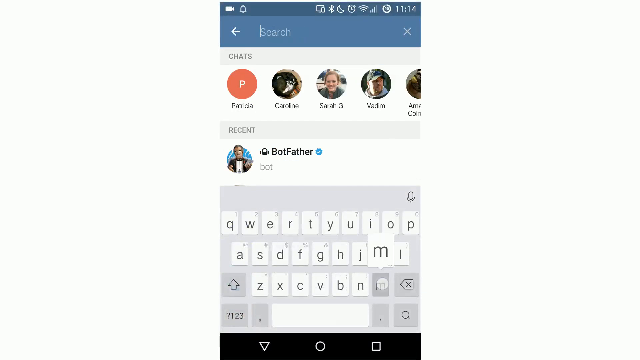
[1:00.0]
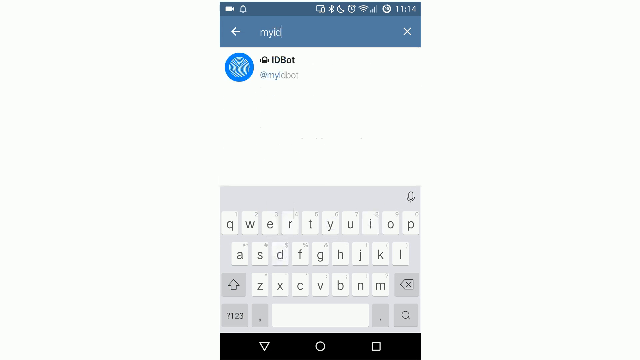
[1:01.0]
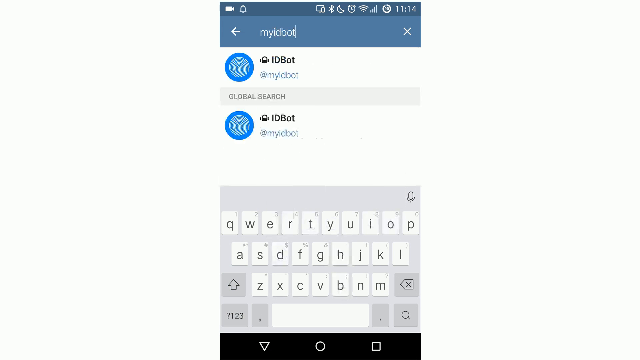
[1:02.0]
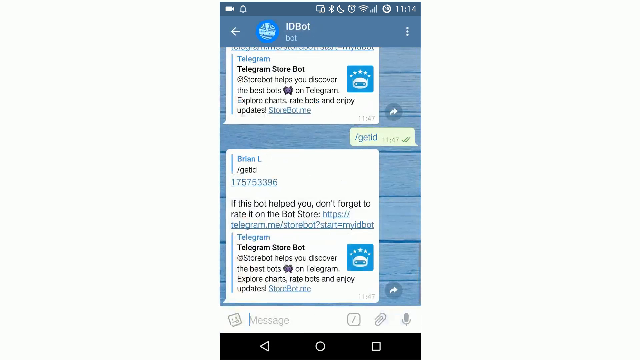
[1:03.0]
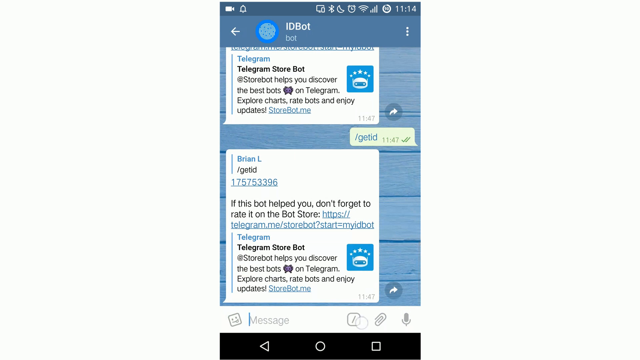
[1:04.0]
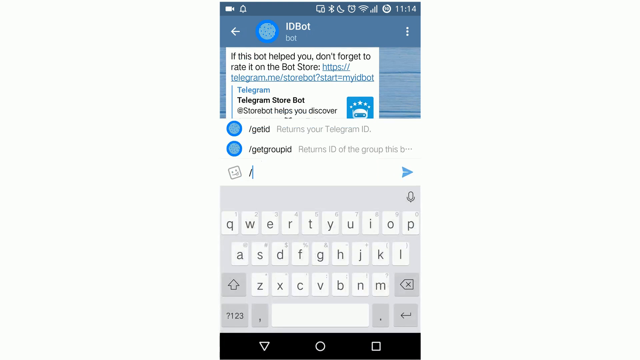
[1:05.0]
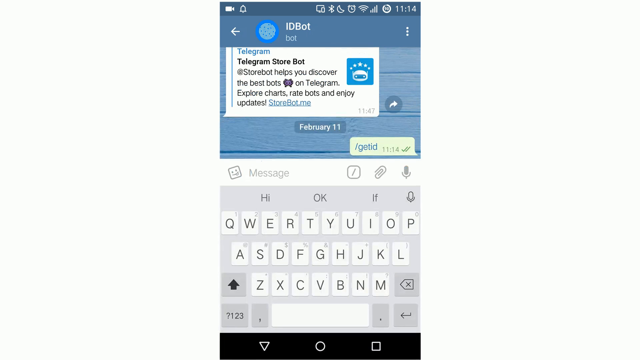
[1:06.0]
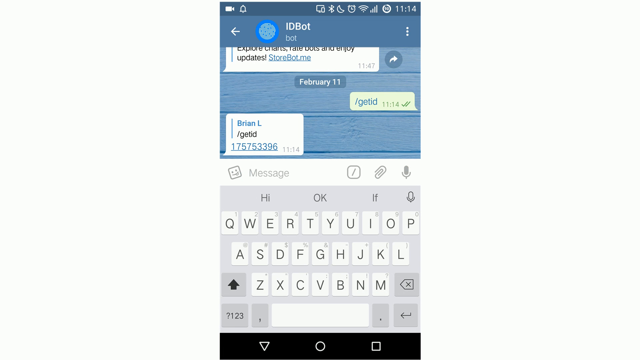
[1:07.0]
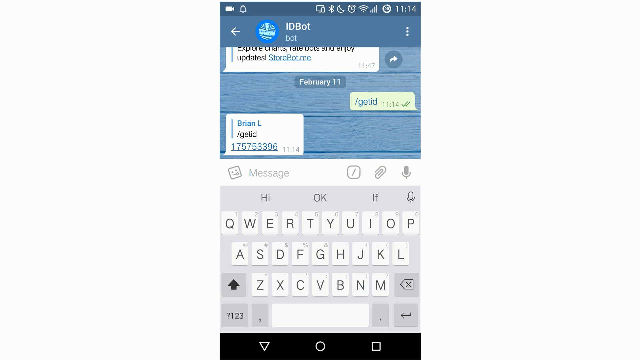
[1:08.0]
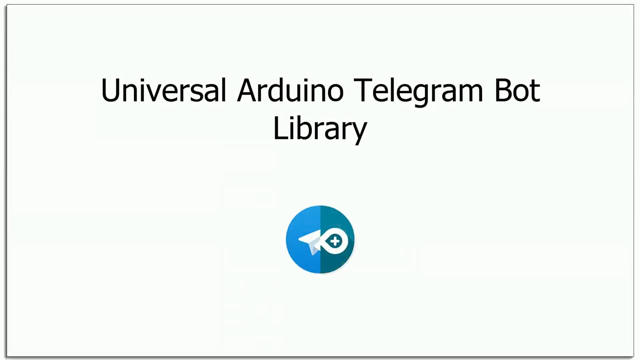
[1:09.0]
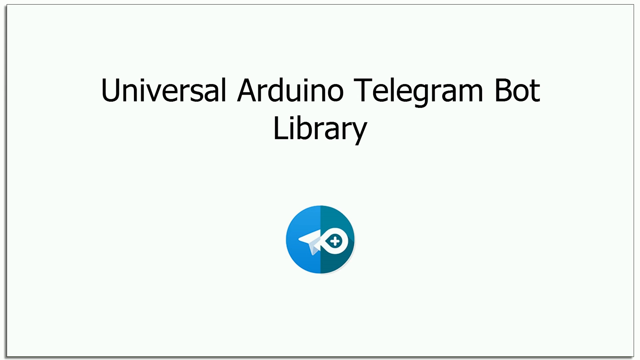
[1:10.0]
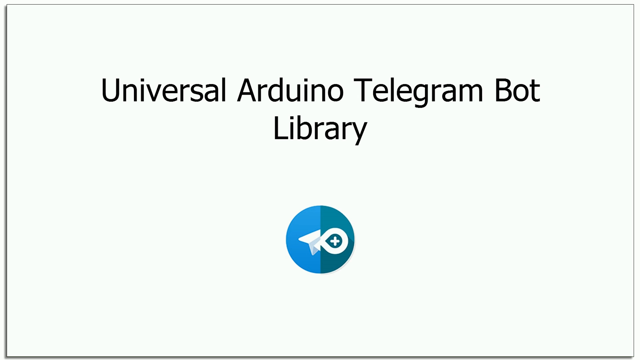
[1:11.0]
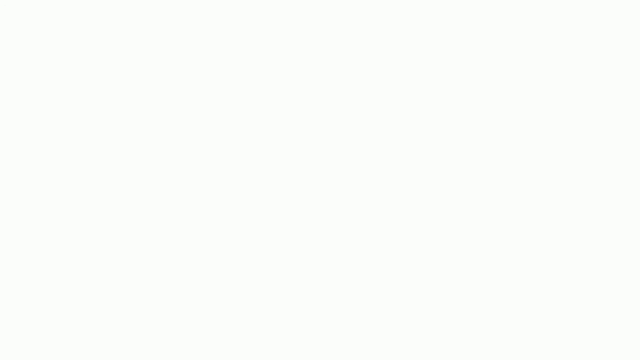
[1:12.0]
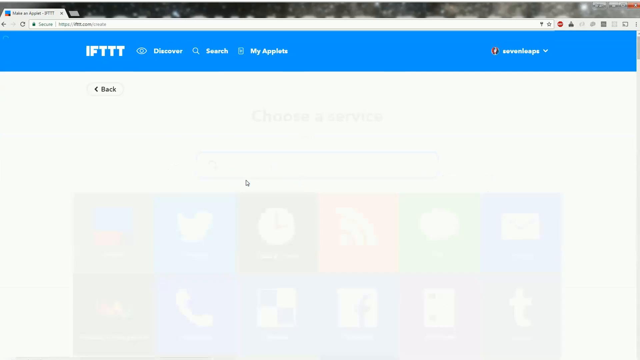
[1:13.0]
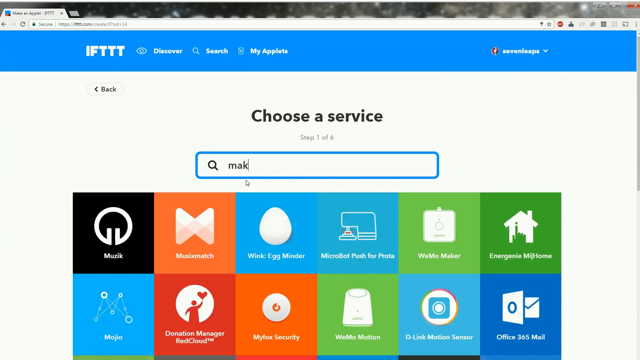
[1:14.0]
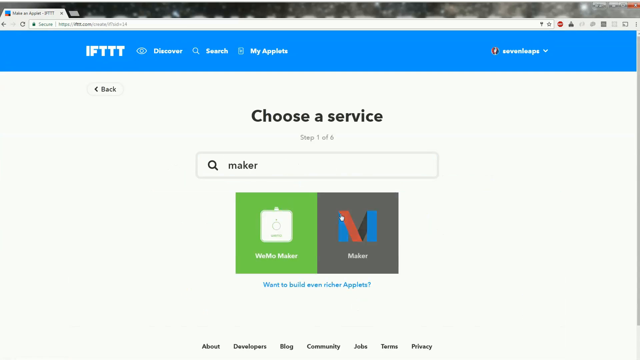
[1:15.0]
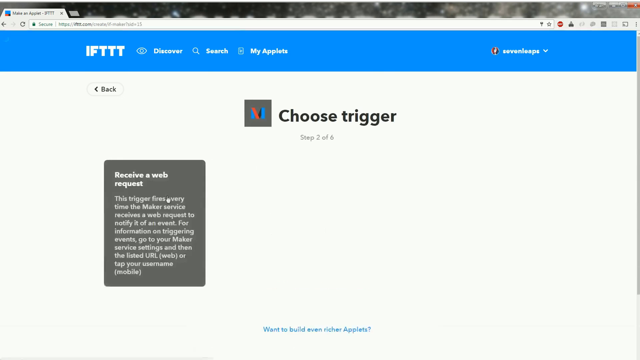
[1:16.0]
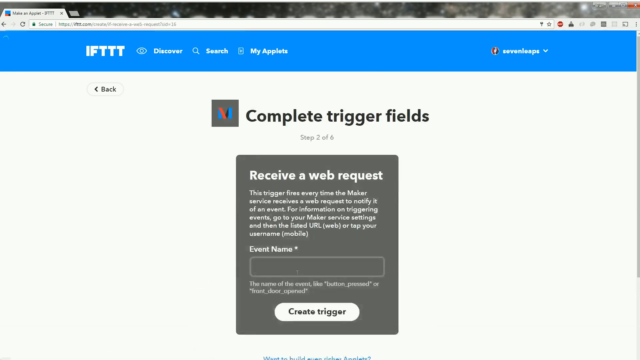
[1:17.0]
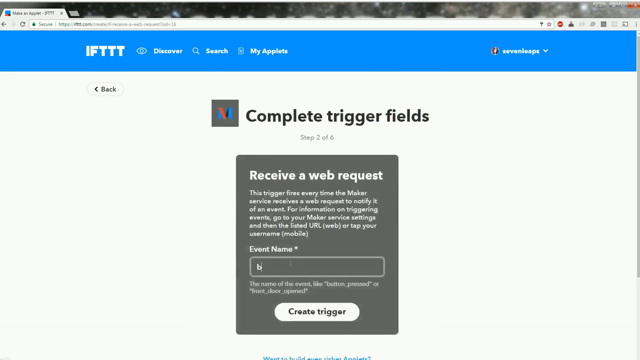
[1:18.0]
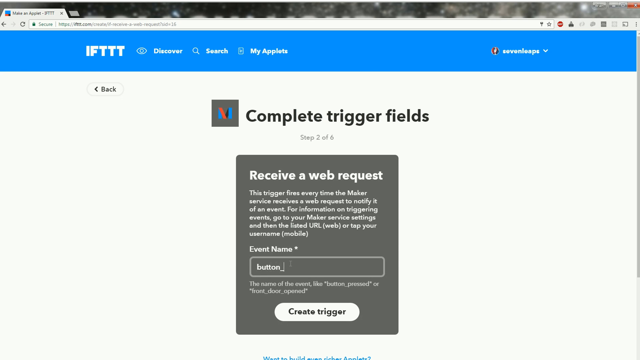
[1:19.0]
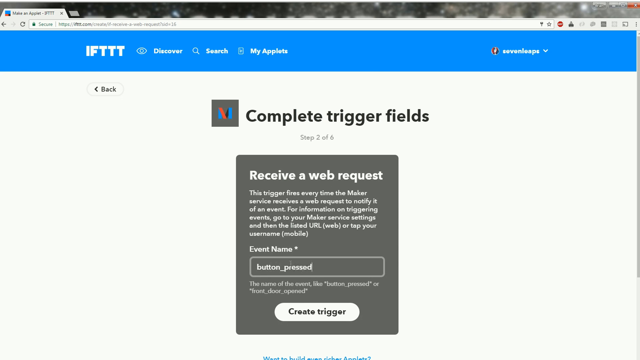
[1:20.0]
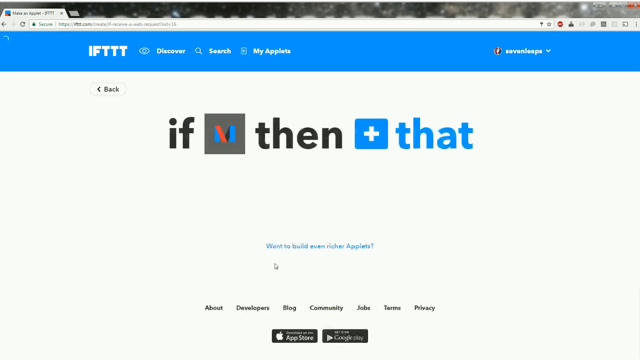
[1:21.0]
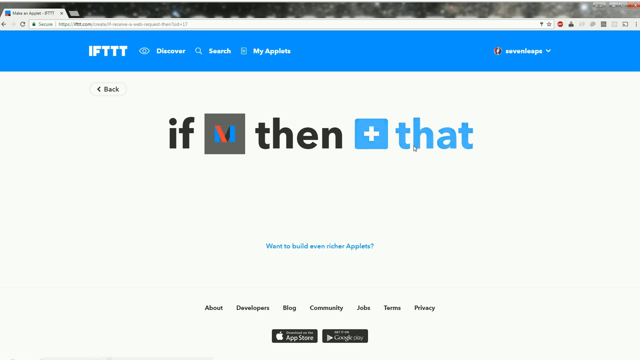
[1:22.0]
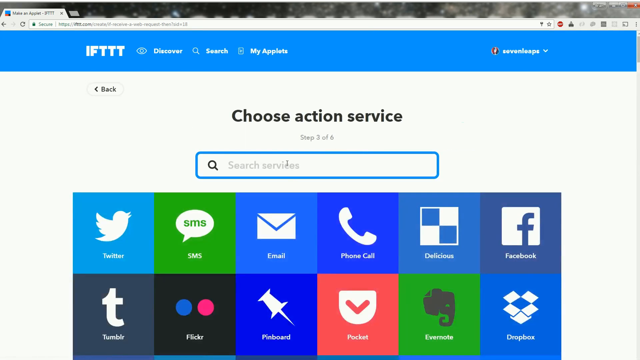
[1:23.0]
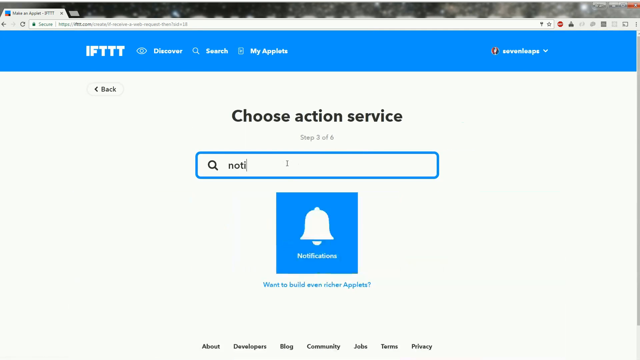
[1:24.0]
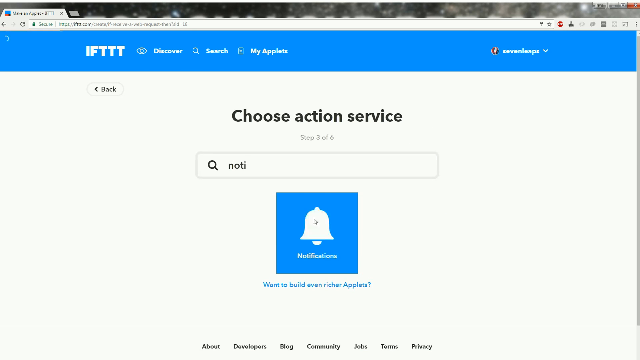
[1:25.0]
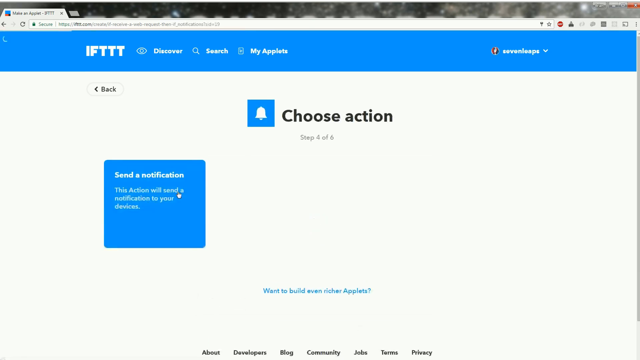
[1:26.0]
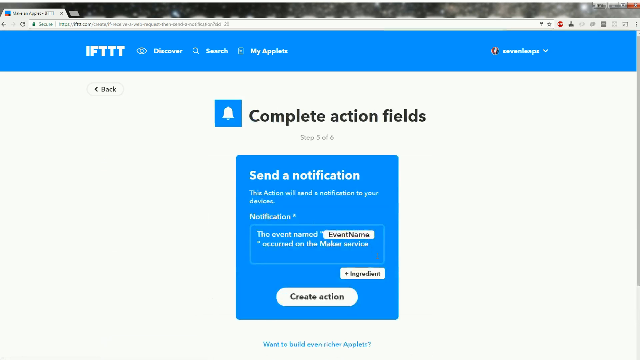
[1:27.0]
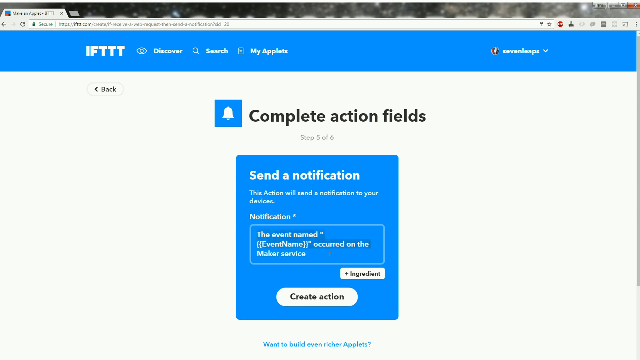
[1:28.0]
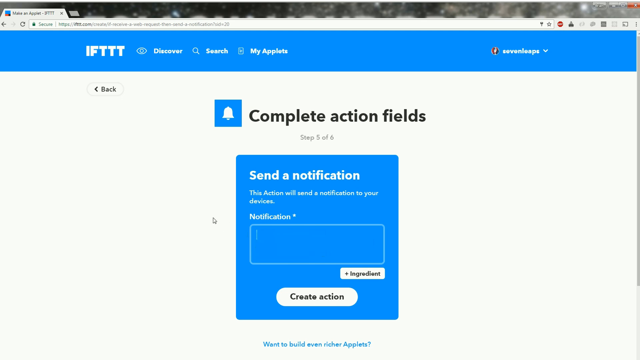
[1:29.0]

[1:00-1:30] On the cell phone, someone appears to be typing "my ID bot" into the search bar, which brings up a screen with some information. They then type "/get ID" and some information comes up. Another screen follows that says "universal Android telegram bot library." Next, the IFTTT website appears. He types "maker" into the search, and two options come up. He clicks the Maker option, which leads to a screen that says "complete trigger fields" and "receive a web request." For the event name he types in what looks like "bottom/path." He returns to the search, types in "notification," chooses notification and then "send notification," and puts a message into the notification.